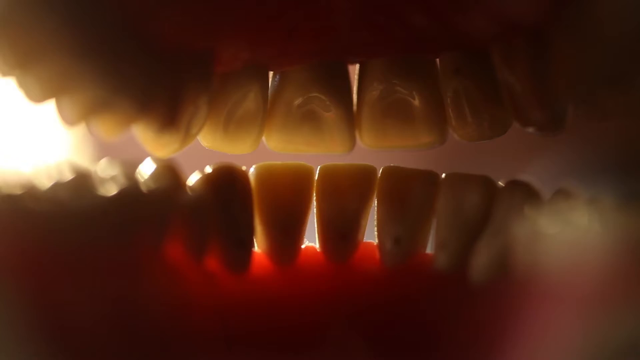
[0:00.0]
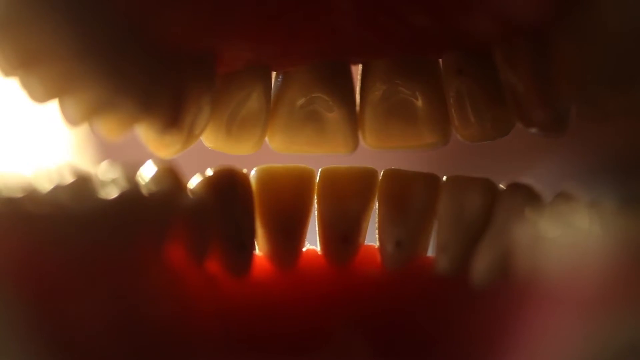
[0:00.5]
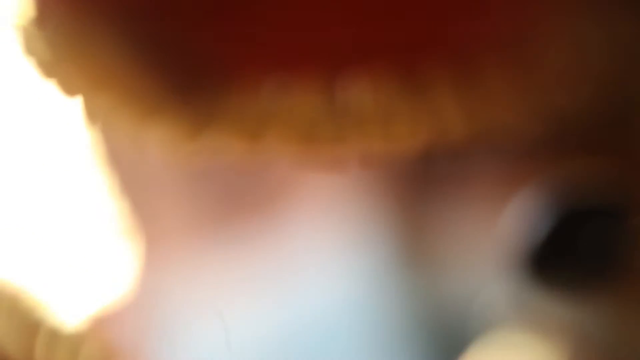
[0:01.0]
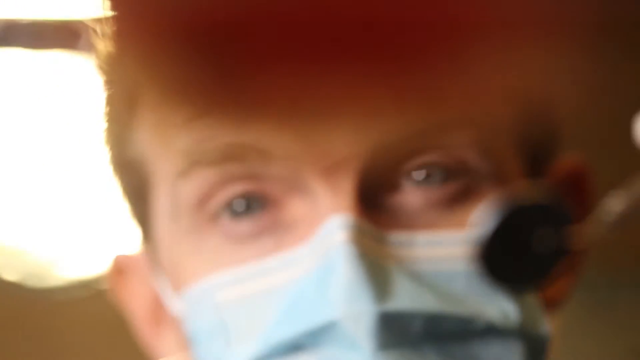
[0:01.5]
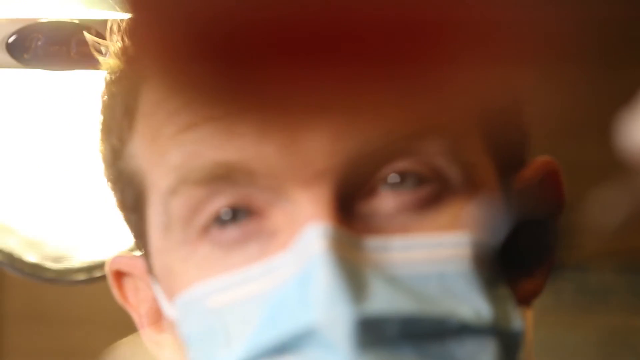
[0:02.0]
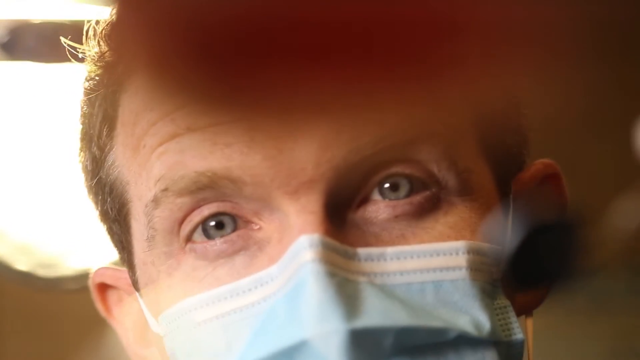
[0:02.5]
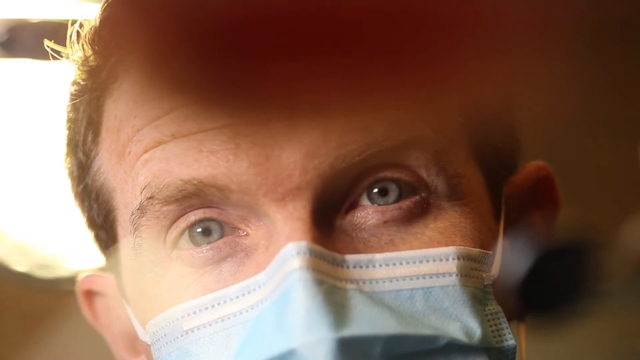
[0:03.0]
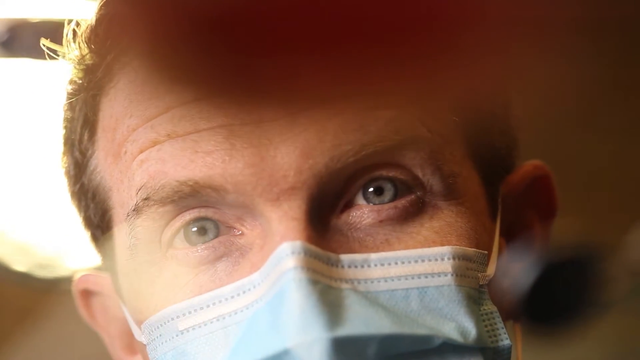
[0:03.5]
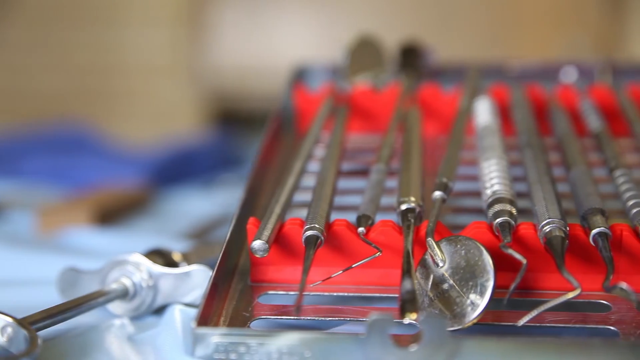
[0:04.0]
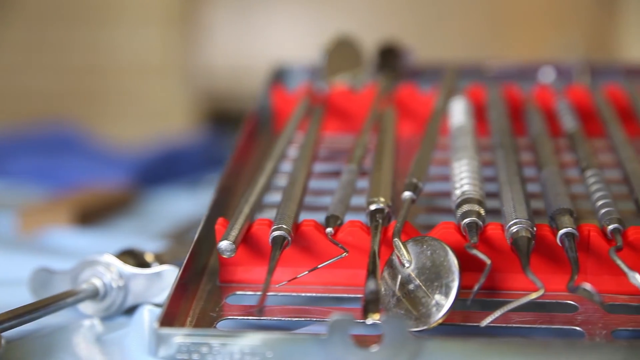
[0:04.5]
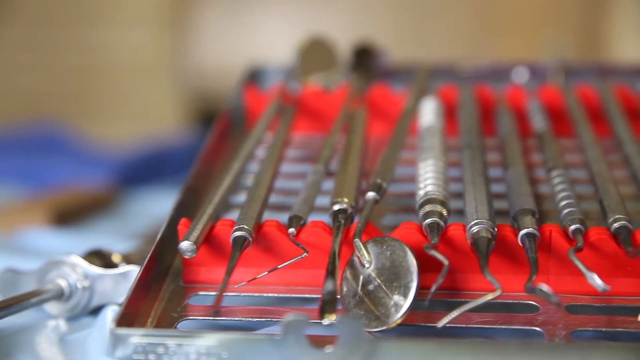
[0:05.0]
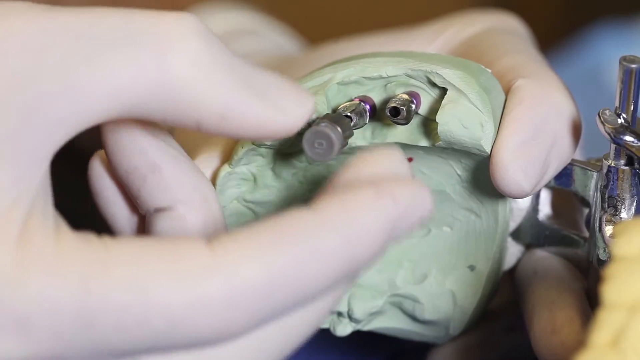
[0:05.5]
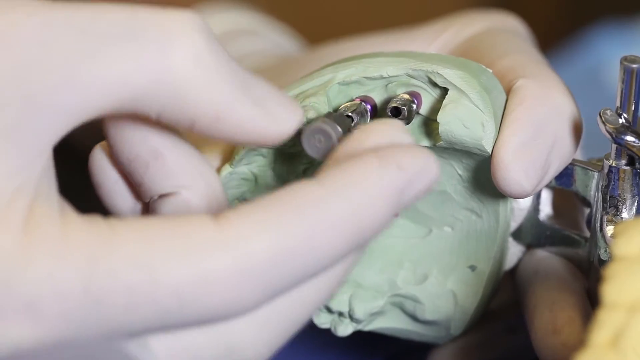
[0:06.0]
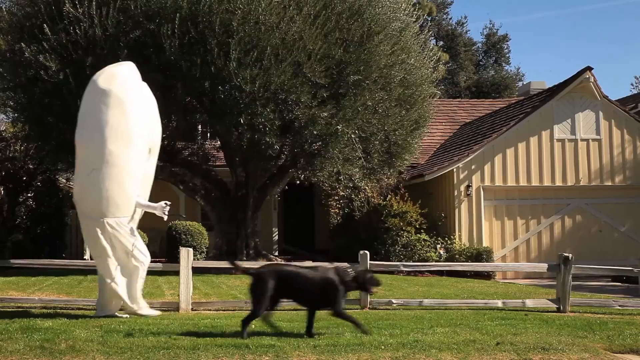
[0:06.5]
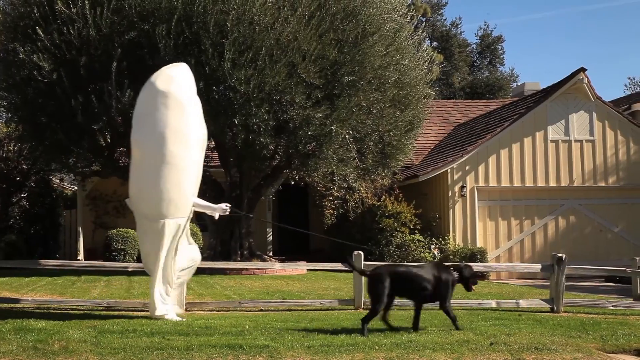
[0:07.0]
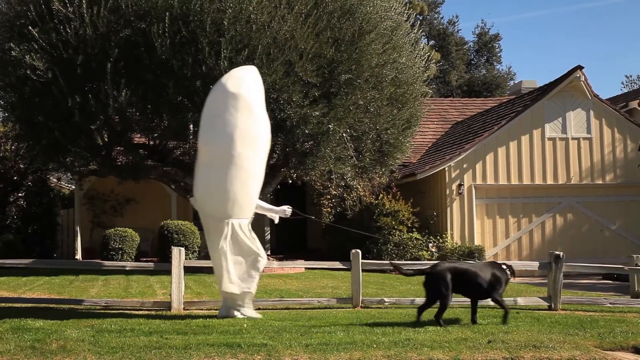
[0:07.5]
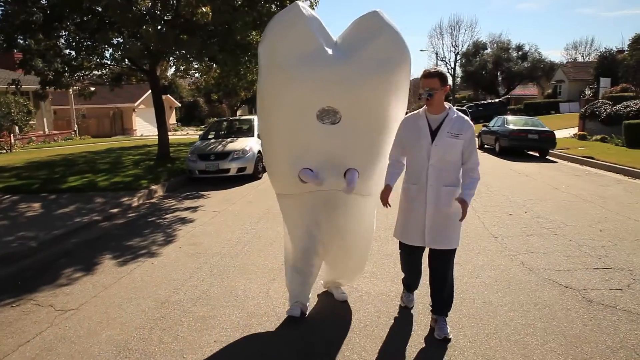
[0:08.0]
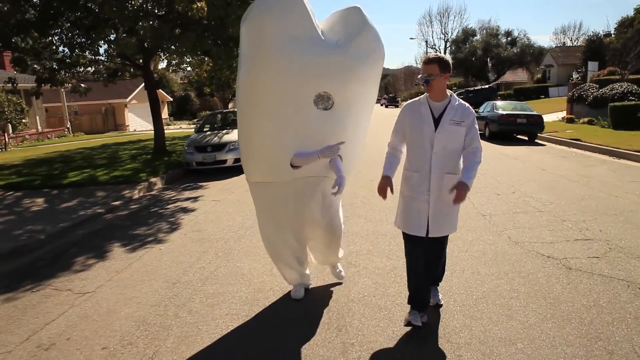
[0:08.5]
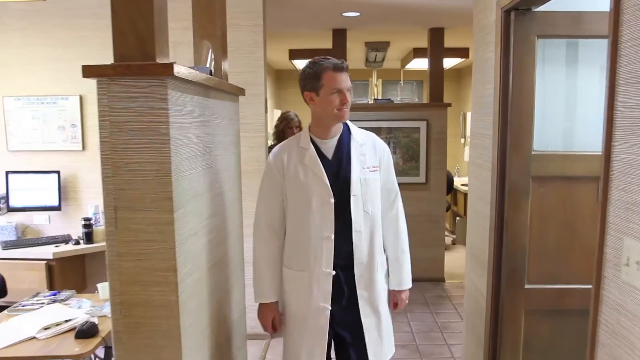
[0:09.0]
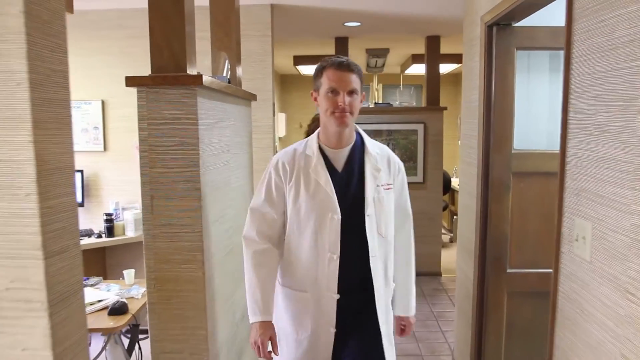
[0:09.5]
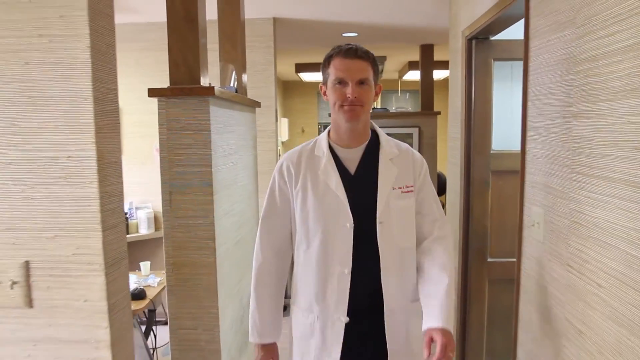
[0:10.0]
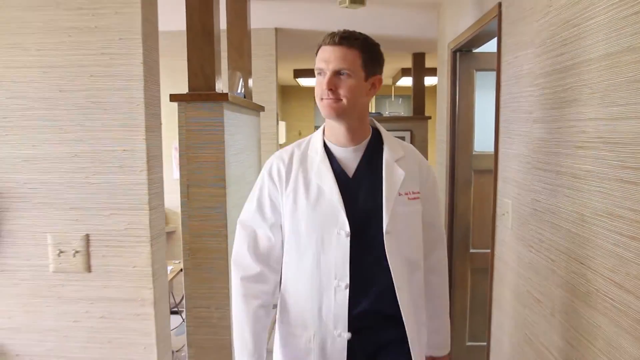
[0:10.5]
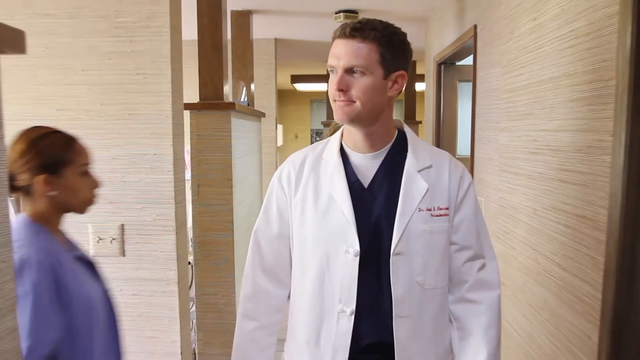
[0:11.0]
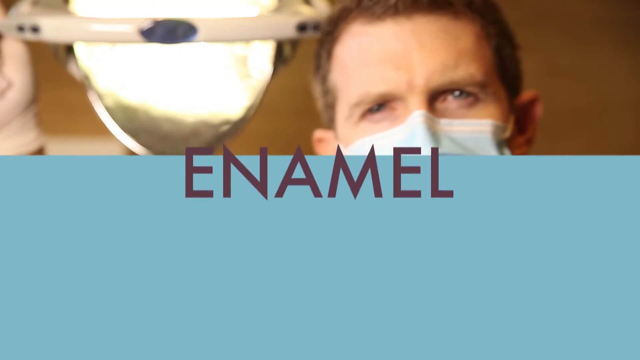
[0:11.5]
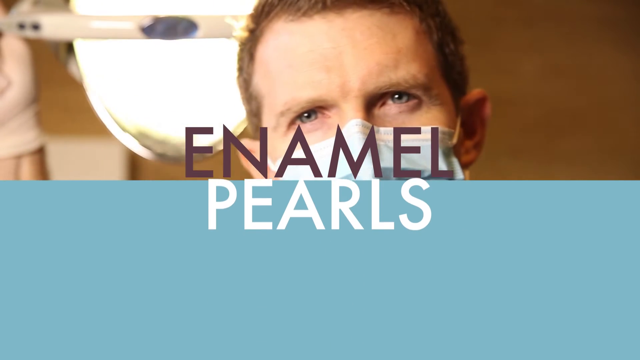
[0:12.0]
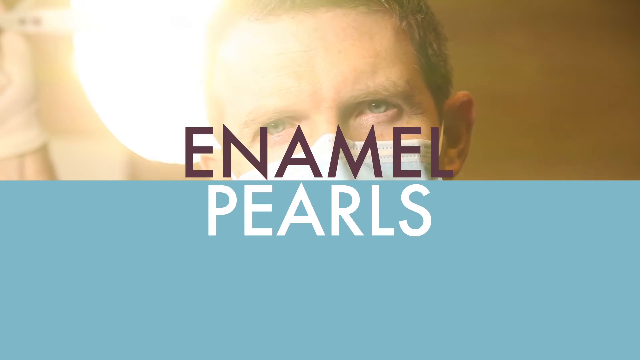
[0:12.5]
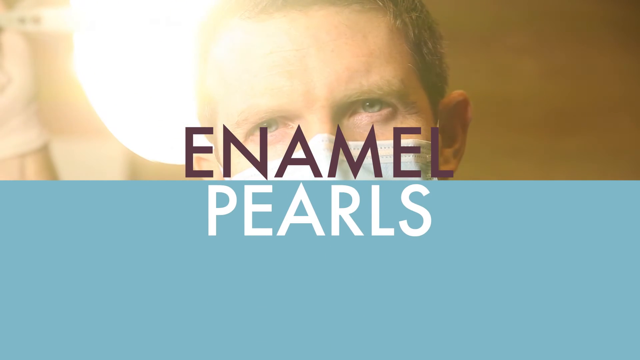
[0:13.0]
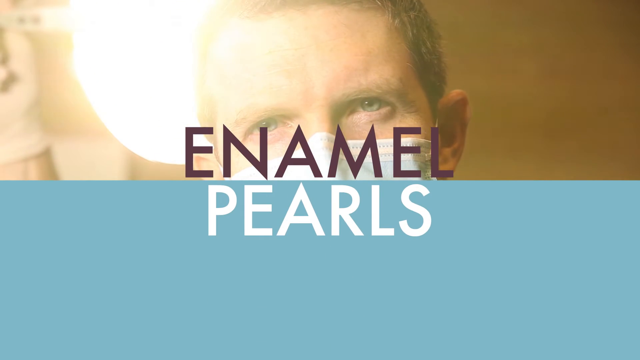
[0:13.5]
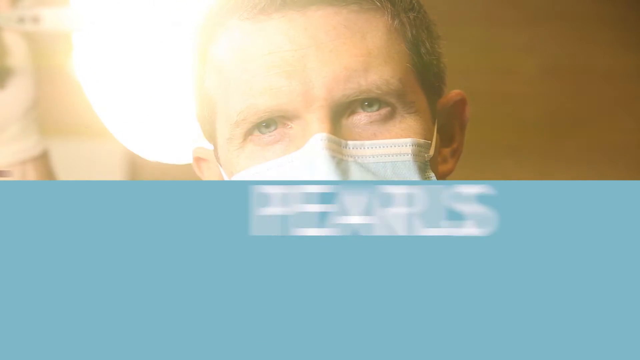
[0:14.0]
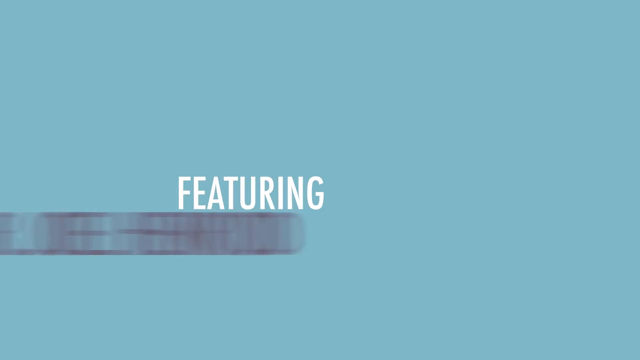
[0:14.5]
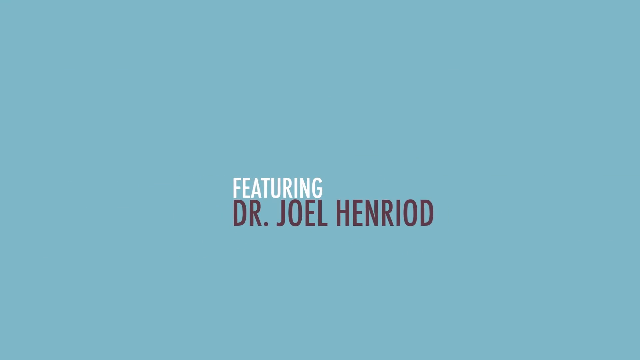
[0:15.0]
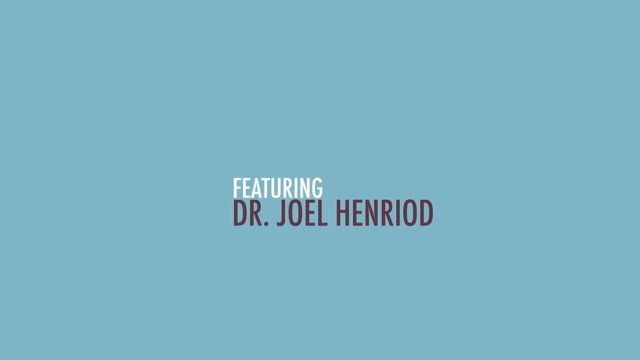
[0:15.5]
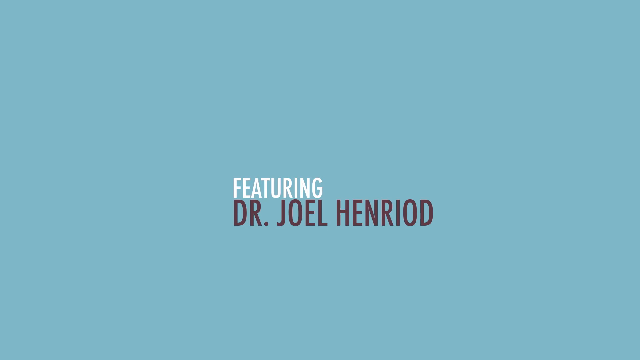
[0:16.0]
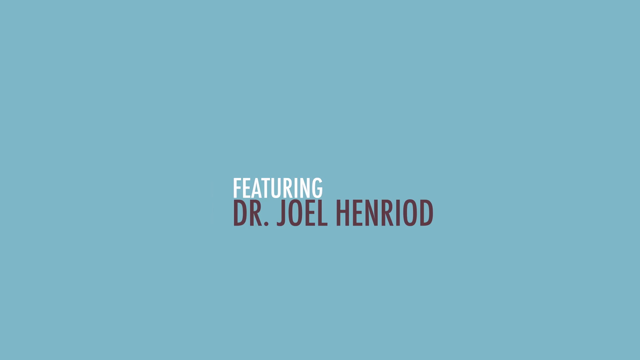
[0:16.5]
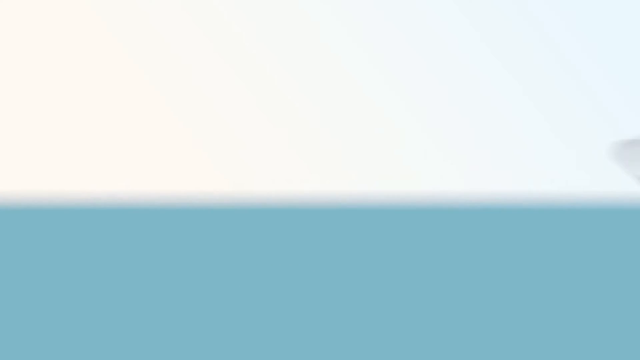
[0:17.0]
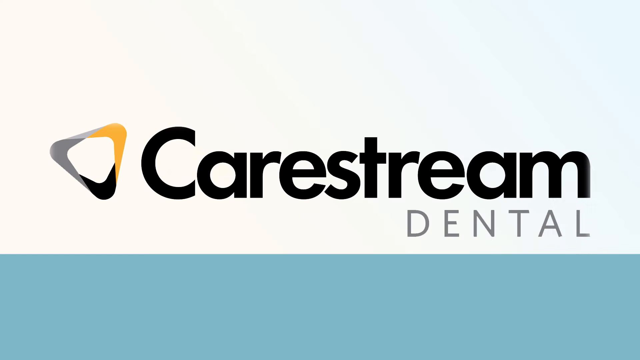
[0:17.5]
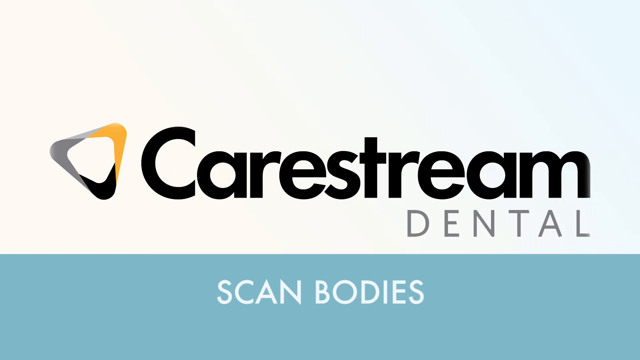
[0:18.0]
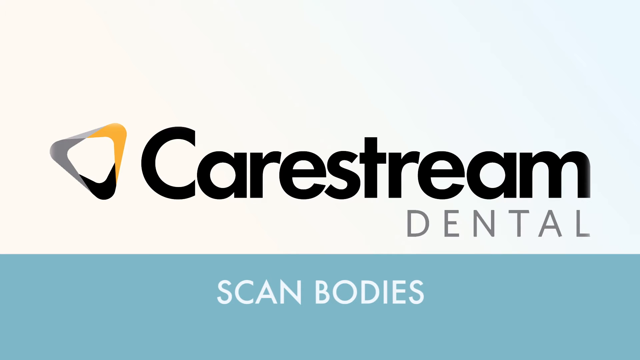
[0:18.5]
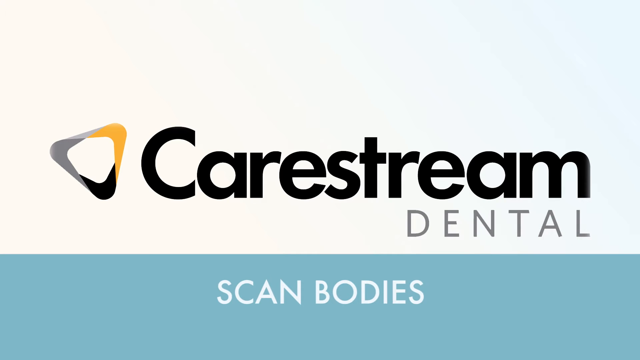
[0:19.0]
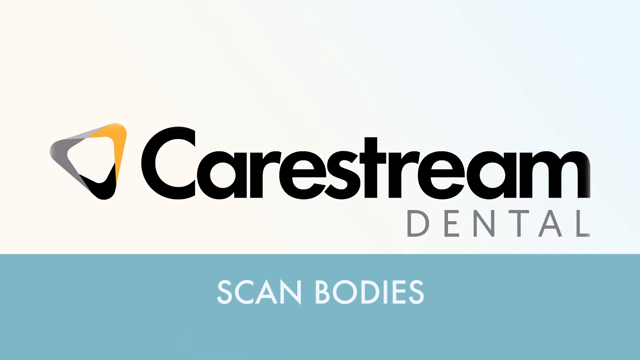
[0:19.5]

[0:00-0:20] The inside of a mouth and its teeth are viewed in what looks to be a 3D animation. The jaw opens, and from the outside a human face wearing a mask is visible. The person, who holds a metal wand and looks like a dentist, looks at the viewer. The video cuts to what looks to be a blanket-like cloth holding many different metal devices used in dentistry, then to a person screwing some type of metal bolt into a gray, clay-like material. Next, a person in a white tooth costume walks a black dog. The video cuts to a person walking down a hallway, then back to that person, and the light is turned on brighter. The video features Dr. Joel Henry Oates.